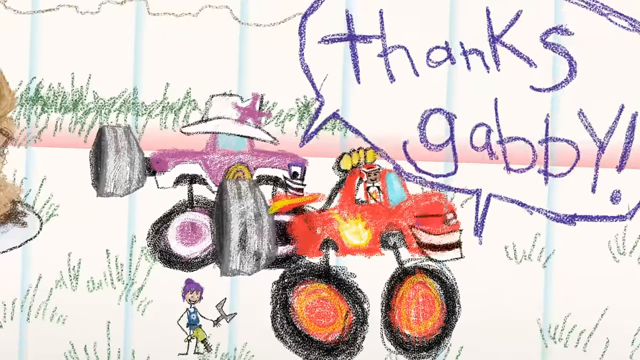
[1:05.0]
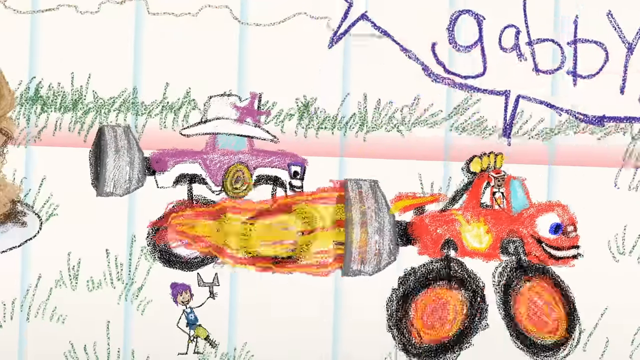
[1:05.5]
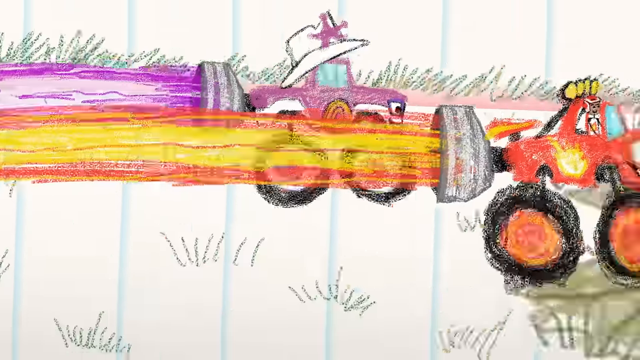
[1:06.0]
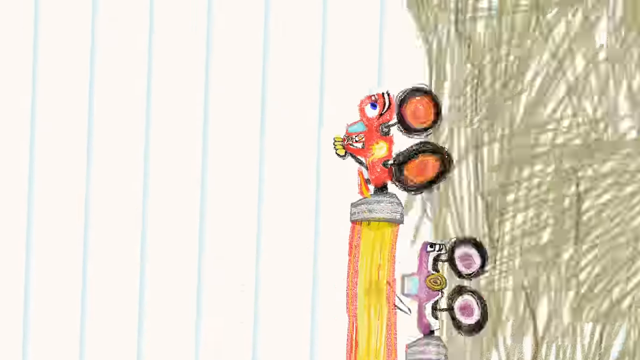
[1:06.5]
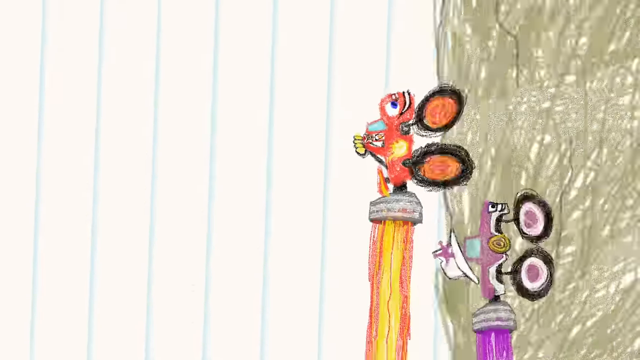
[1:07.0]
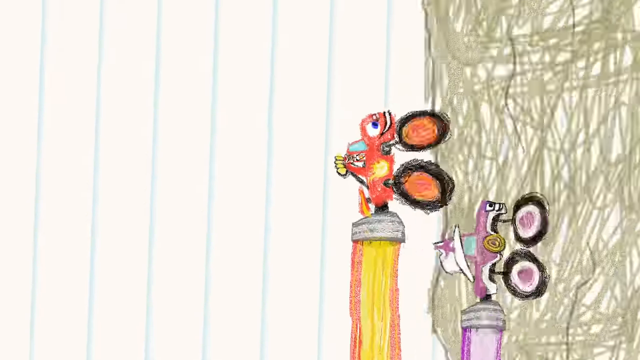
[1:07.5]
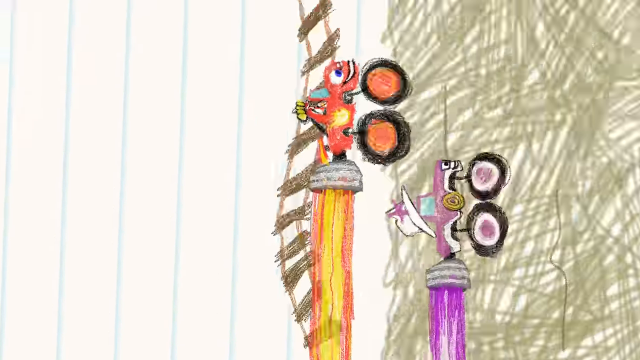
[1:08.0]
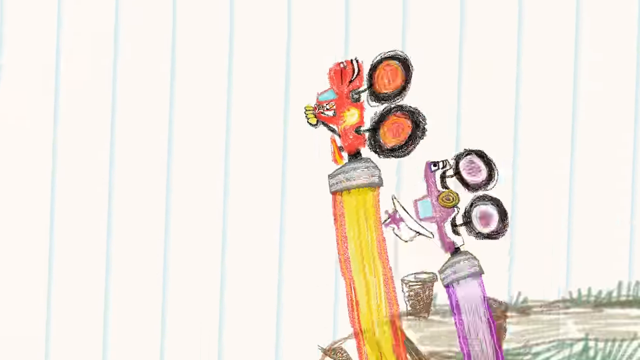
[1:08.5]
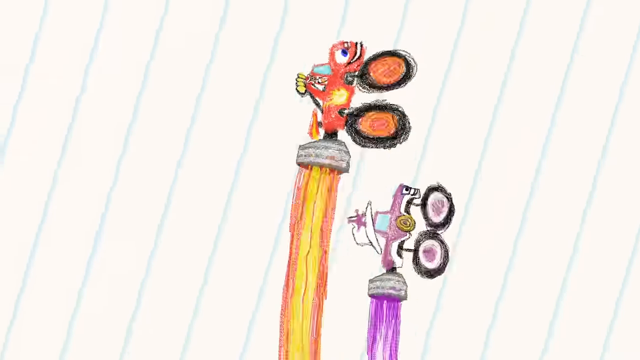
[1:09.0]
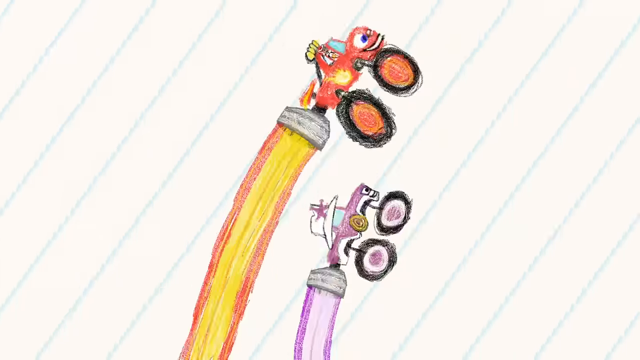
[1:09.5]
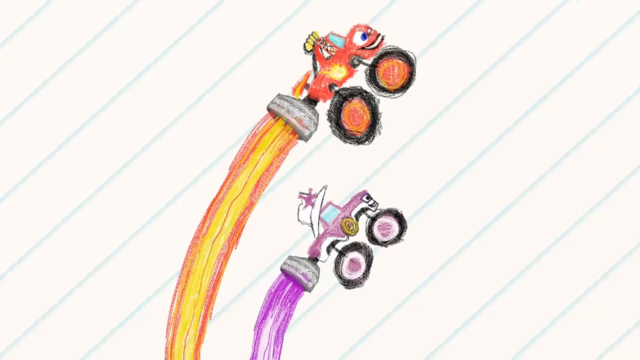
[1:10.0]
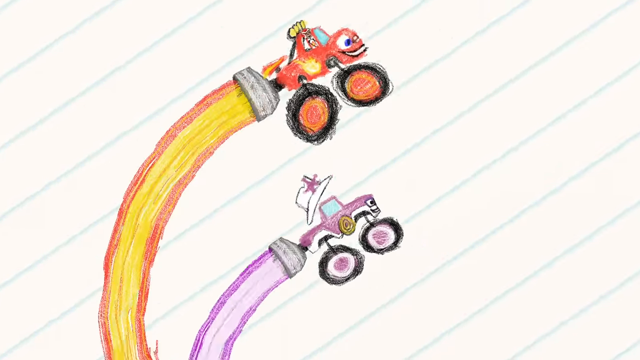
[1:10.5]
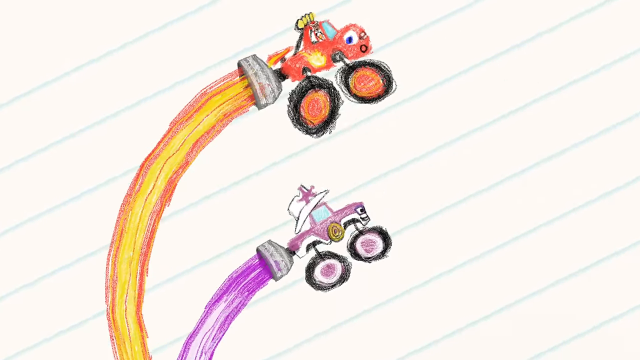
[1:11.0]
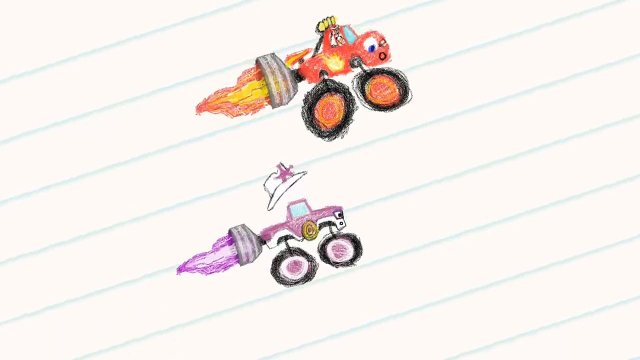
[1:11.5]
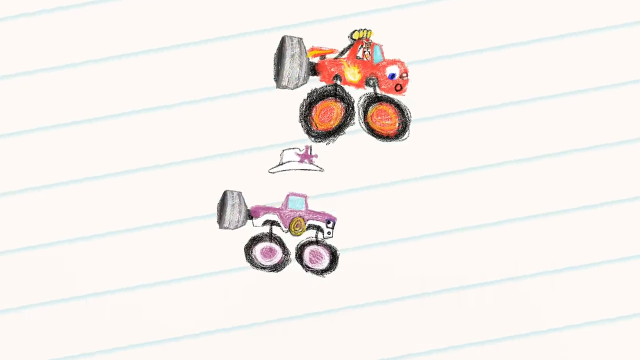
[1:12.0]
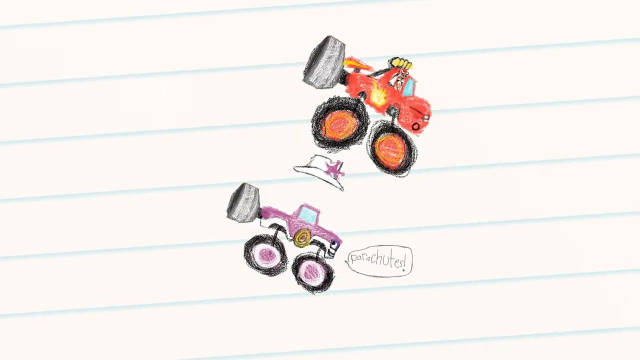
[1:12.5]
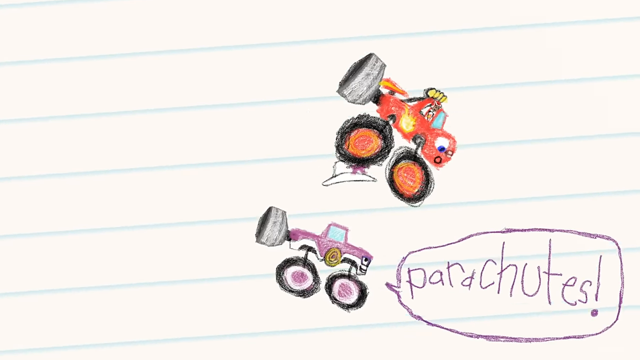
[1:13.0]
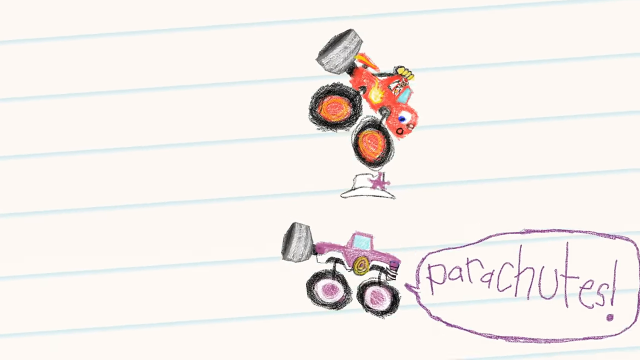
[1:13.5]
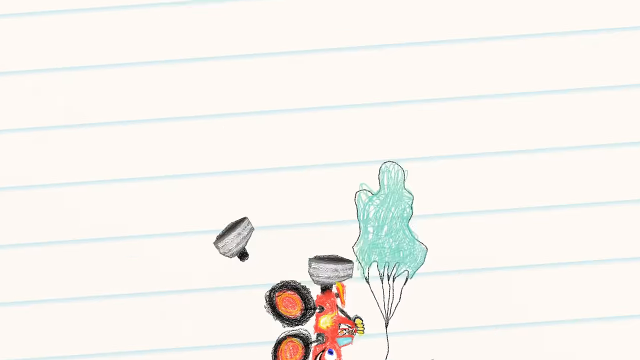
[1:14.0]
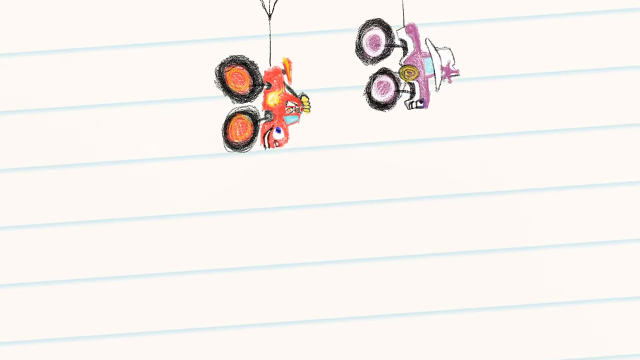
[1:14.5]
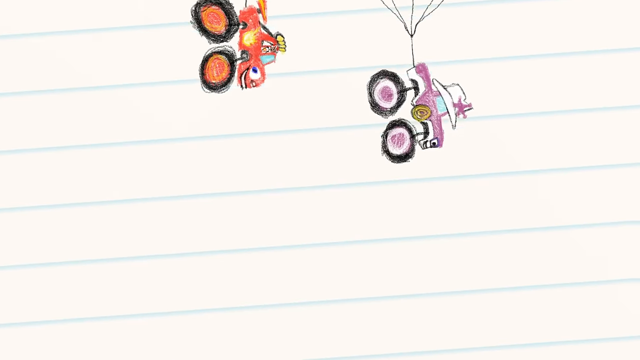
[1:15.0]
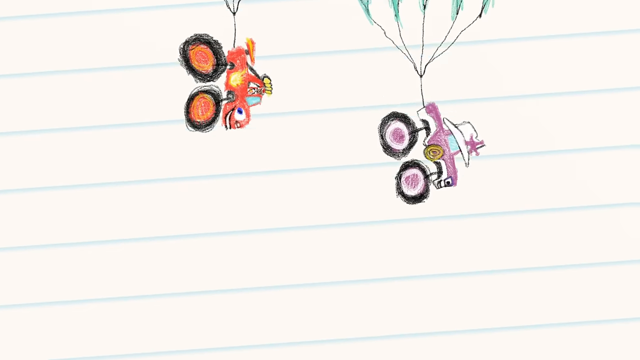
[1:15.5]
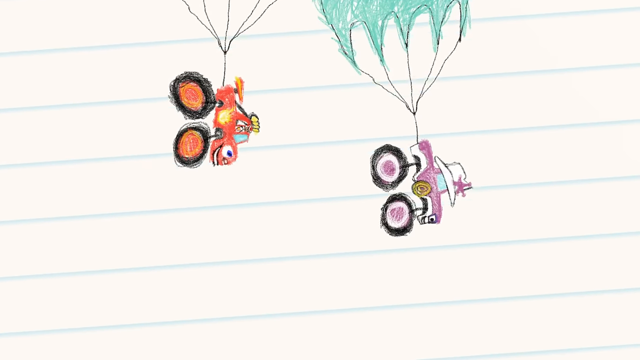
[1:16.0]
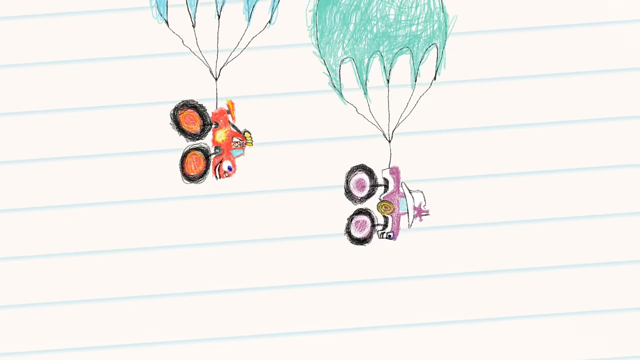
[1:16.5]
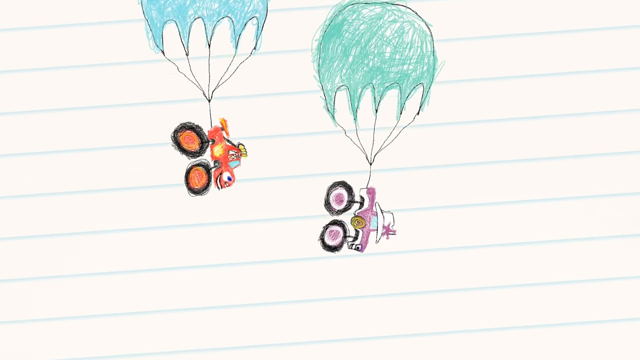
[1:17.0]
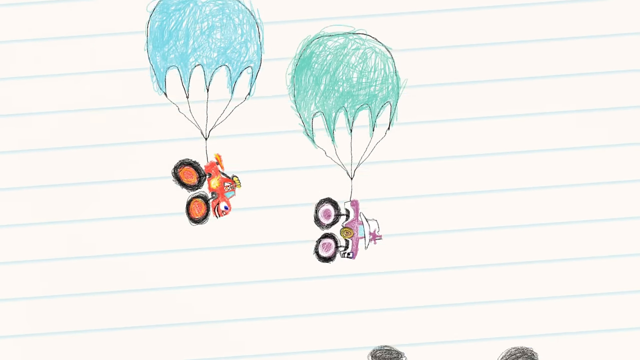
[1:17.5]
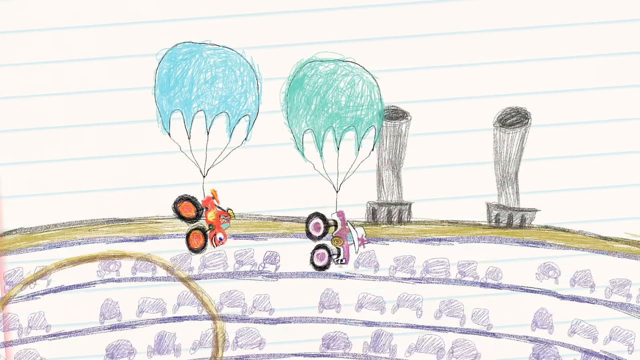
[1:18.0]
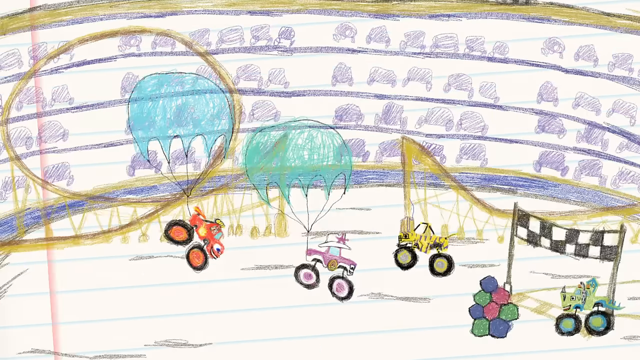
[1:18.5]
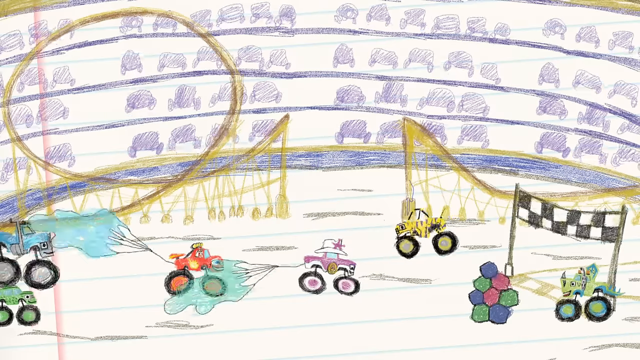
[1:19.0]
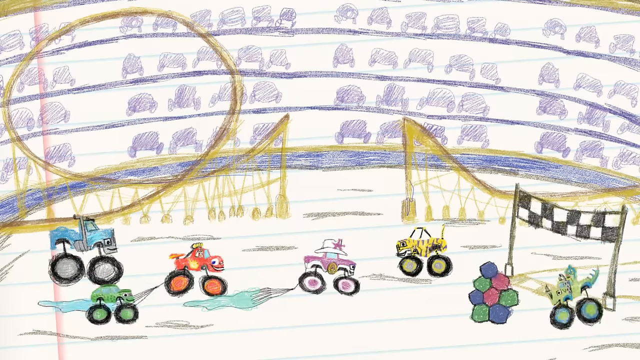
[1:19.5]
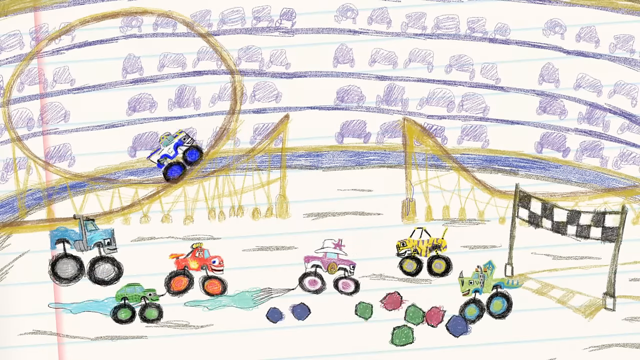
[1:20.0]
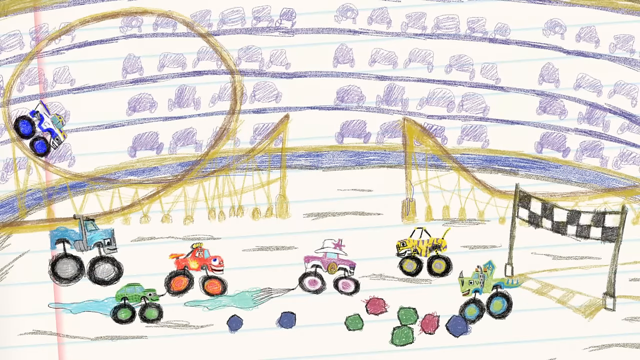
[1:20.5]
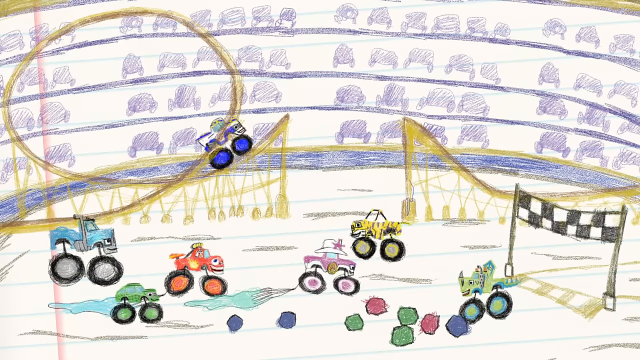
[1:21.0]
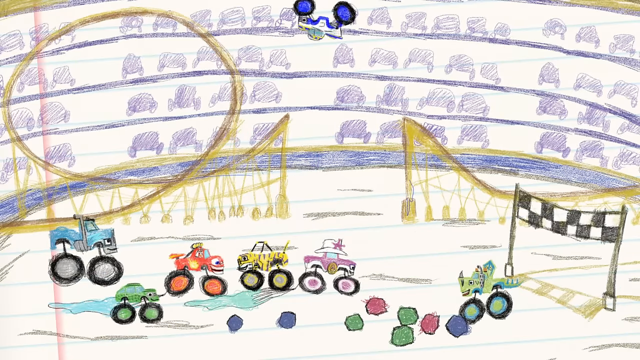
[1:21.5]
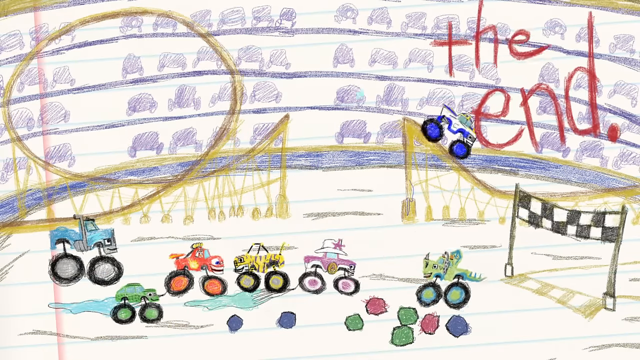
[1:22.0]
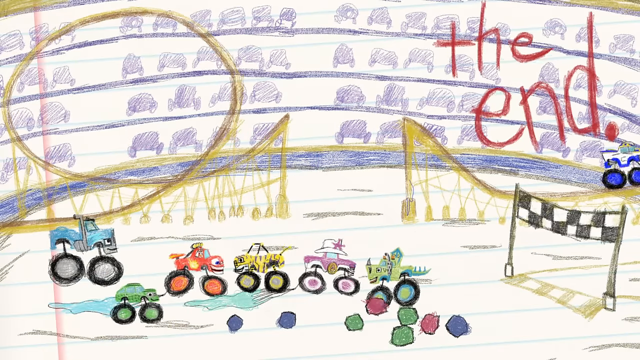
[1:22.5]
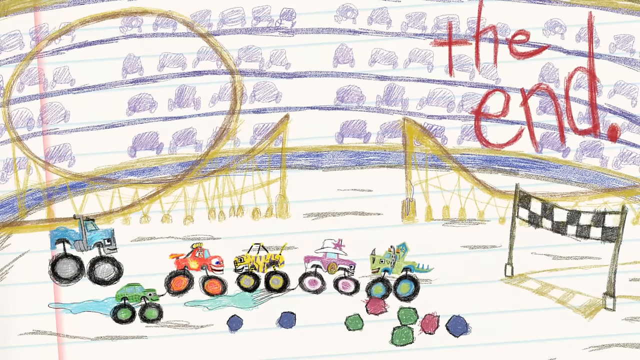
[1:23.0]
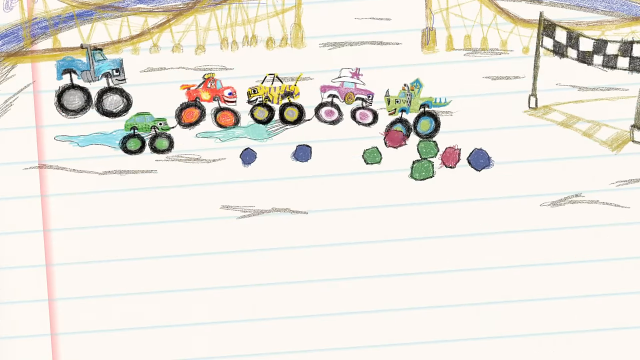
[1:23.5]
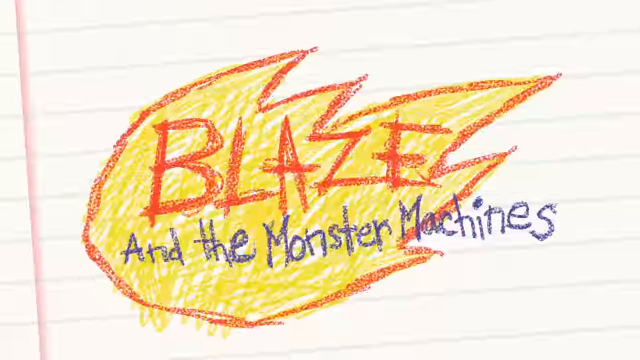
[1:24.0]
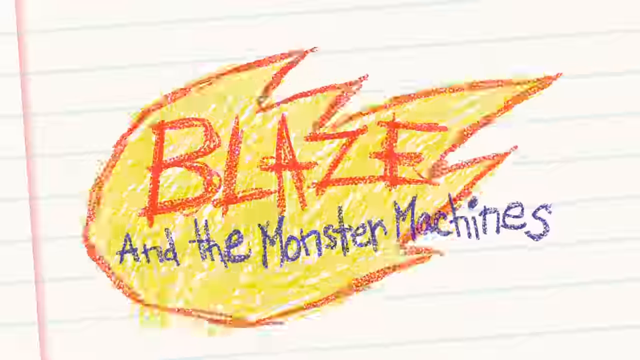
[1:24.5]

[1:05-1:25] Gabby has apparently built something on the back of each truck, possibly a turbo engine. The trucks fire it up, flames come out, and they end up high in the sky. When the turbo boost shuts off, parachutes come out, and the trucks fall to the ground, each with its own parachute. They land in the center of what looks like a racetrack, with a kind of slide and a whirly thing they can drive over to do tricks for the audience, which appears to be made up of different types of vehicles.